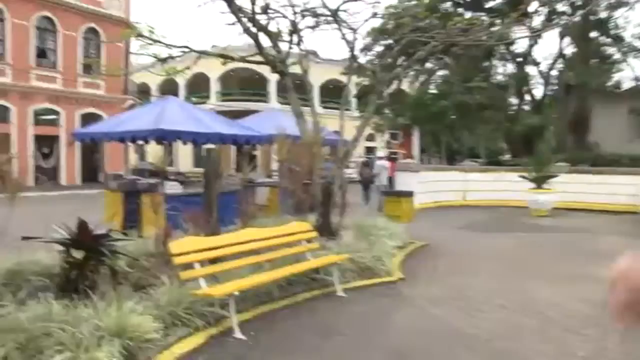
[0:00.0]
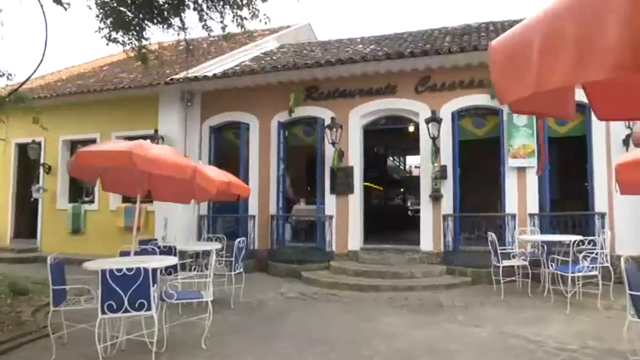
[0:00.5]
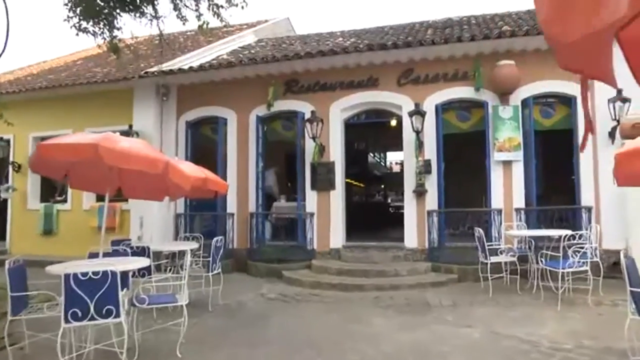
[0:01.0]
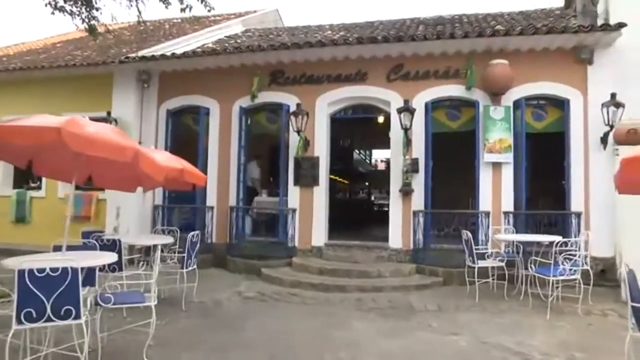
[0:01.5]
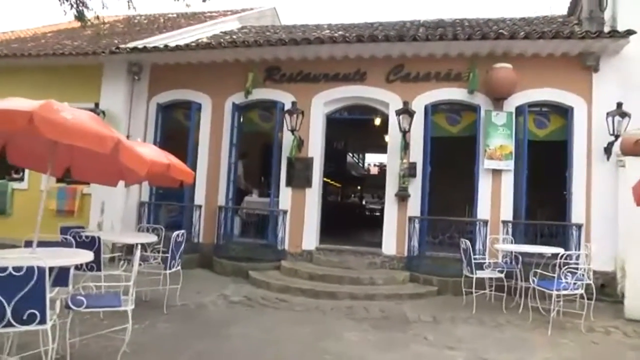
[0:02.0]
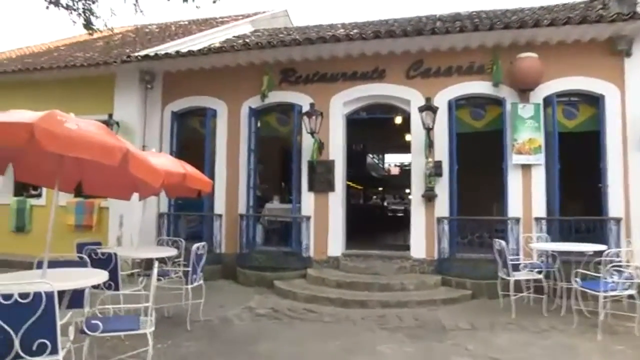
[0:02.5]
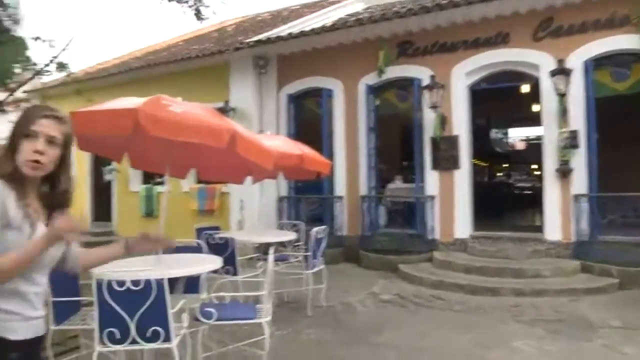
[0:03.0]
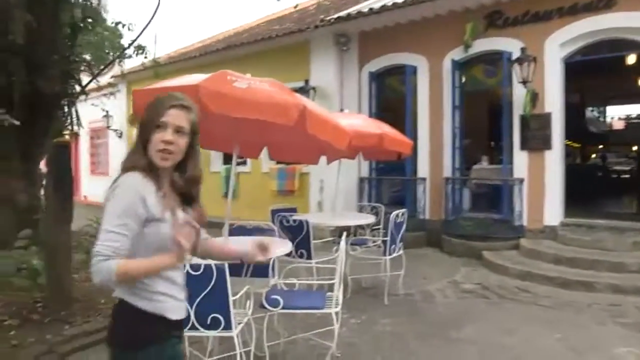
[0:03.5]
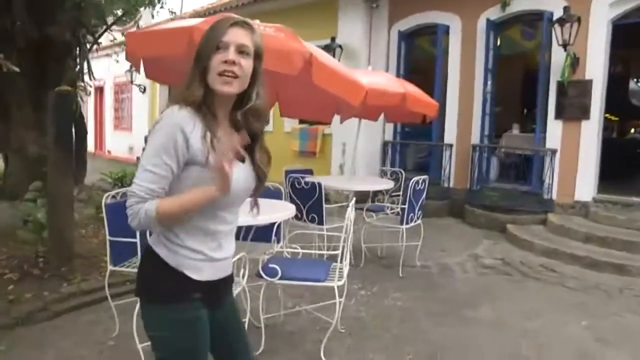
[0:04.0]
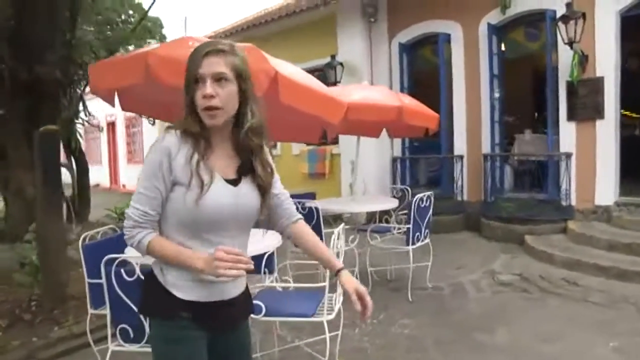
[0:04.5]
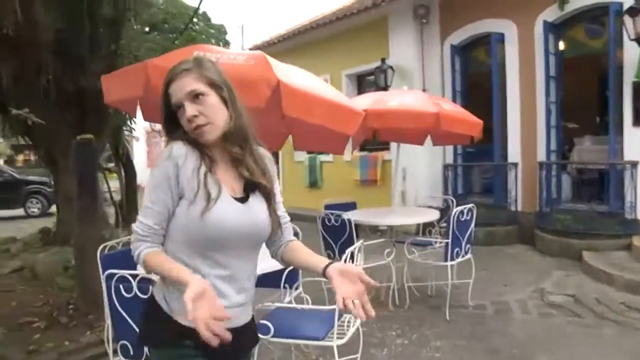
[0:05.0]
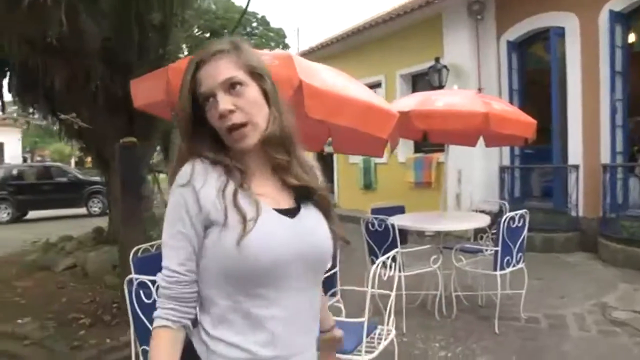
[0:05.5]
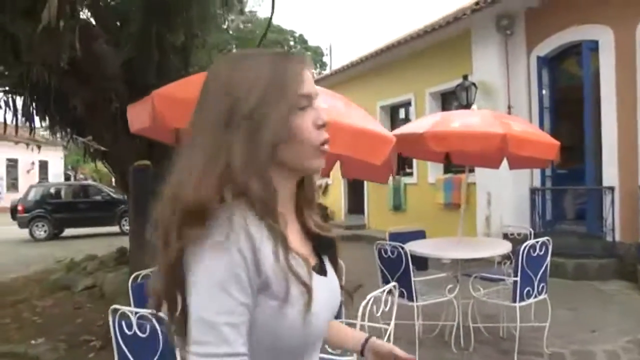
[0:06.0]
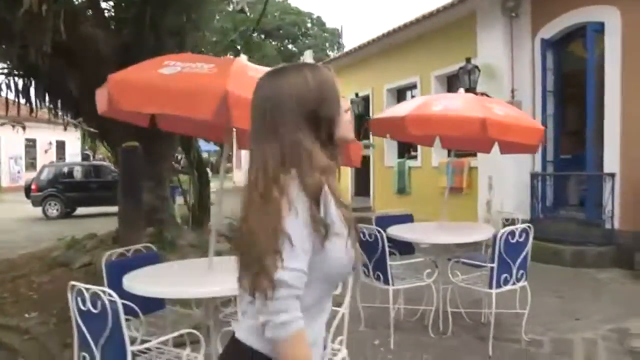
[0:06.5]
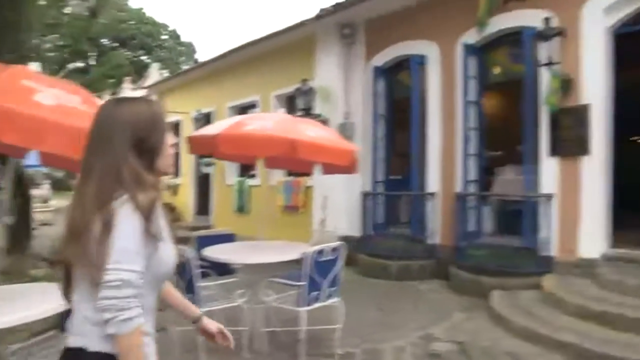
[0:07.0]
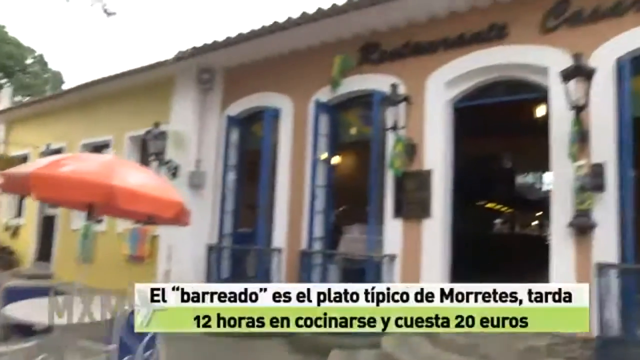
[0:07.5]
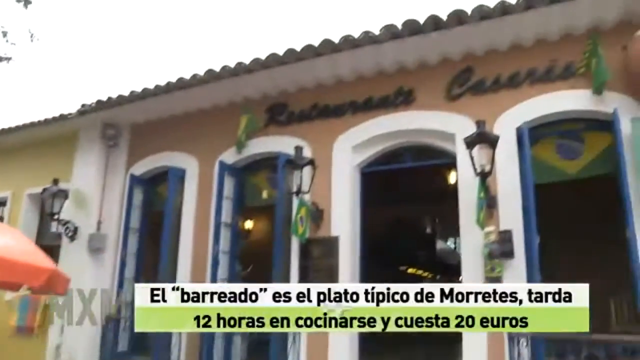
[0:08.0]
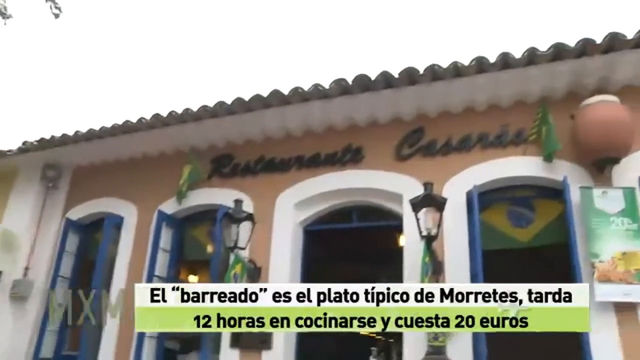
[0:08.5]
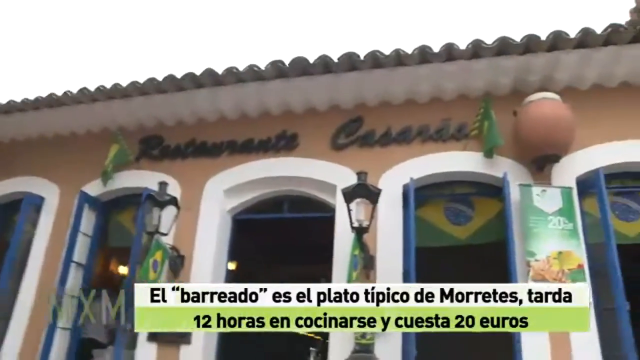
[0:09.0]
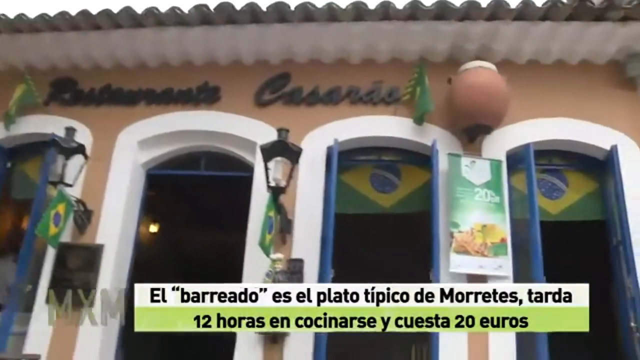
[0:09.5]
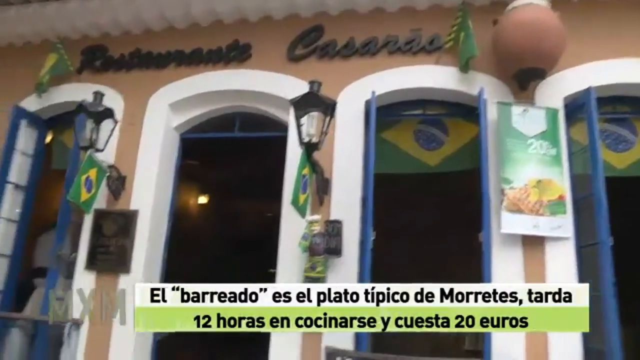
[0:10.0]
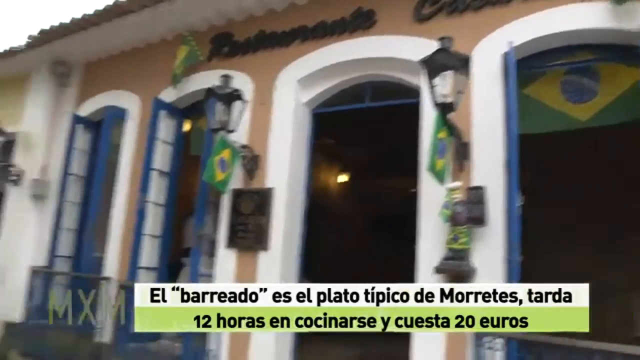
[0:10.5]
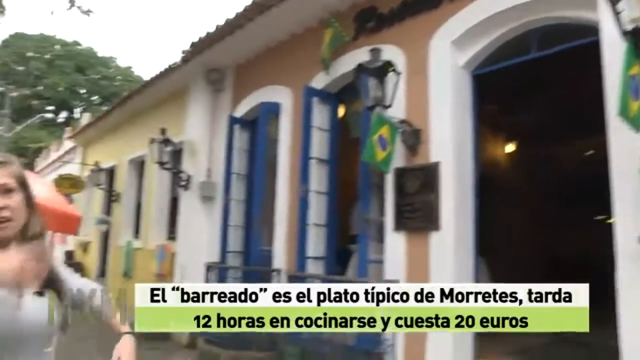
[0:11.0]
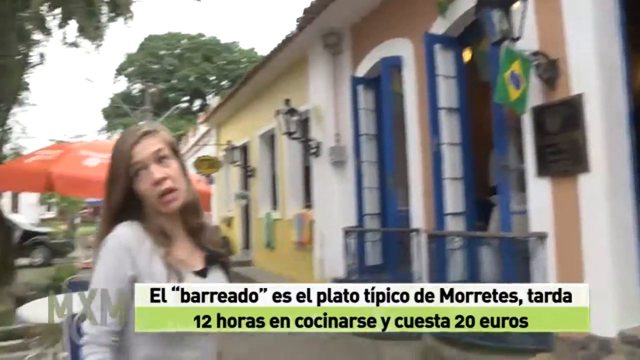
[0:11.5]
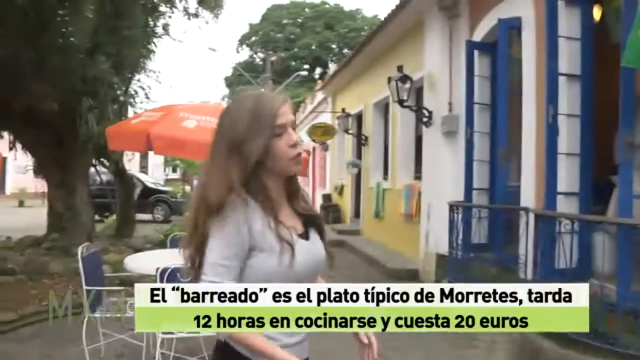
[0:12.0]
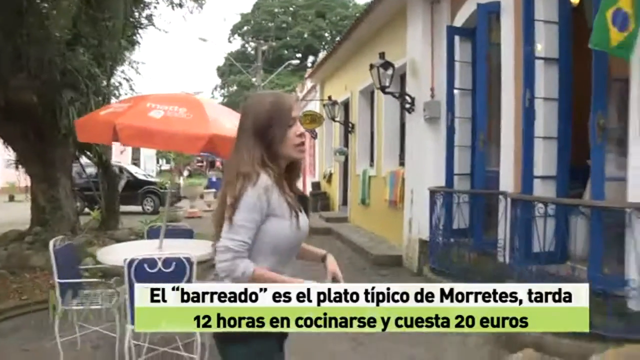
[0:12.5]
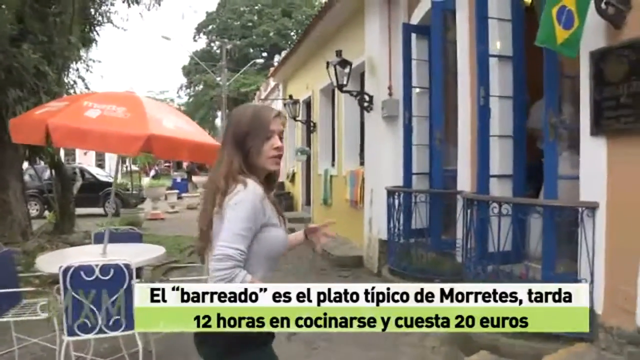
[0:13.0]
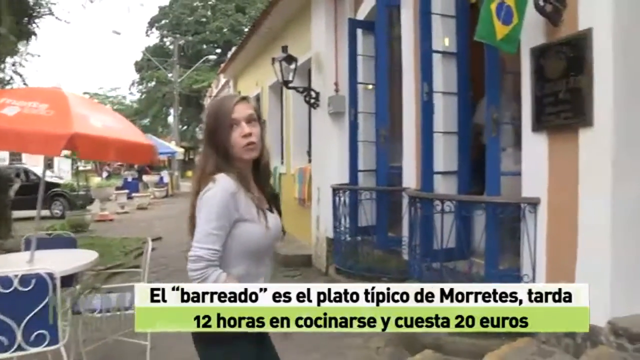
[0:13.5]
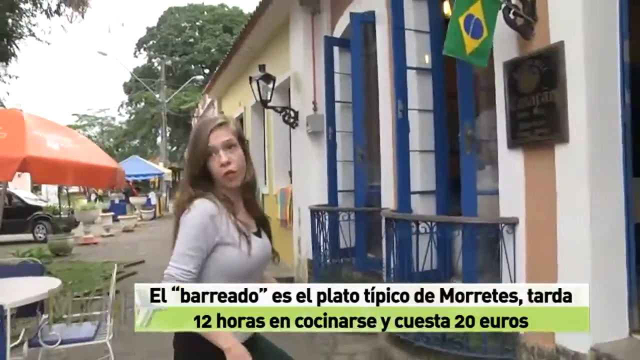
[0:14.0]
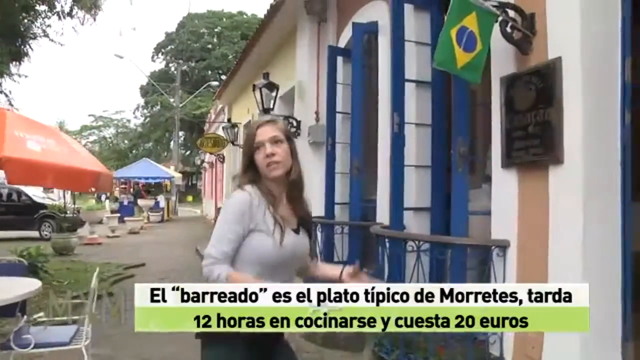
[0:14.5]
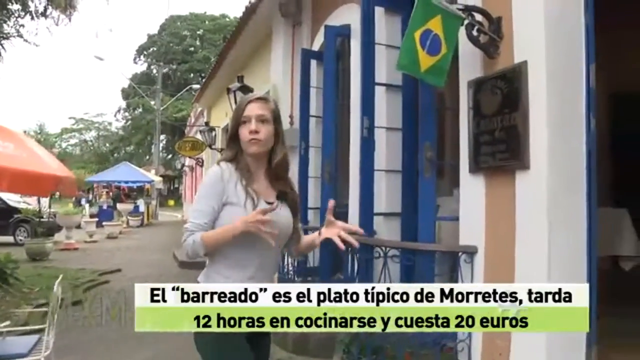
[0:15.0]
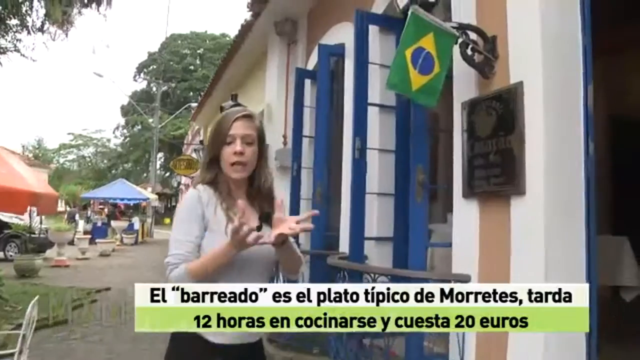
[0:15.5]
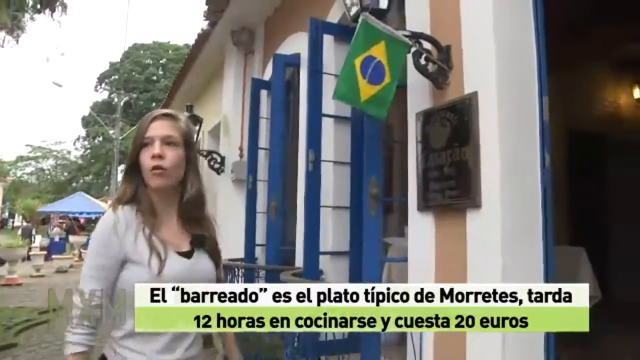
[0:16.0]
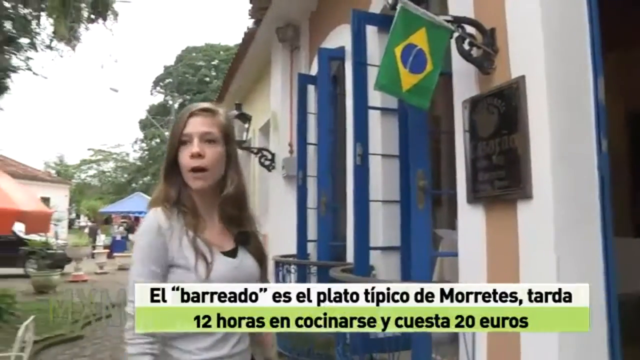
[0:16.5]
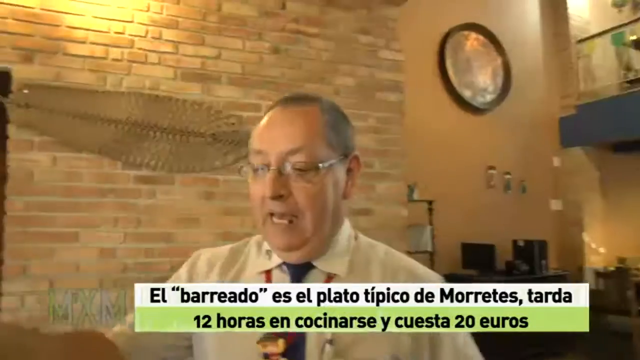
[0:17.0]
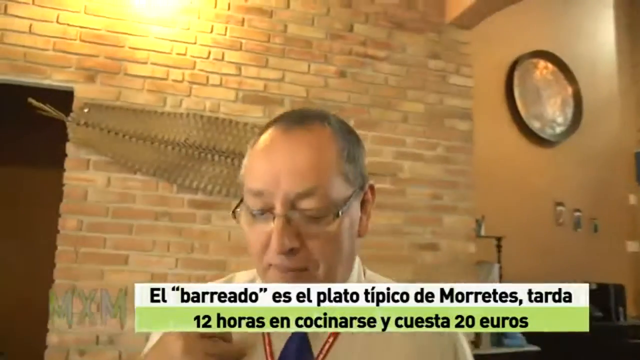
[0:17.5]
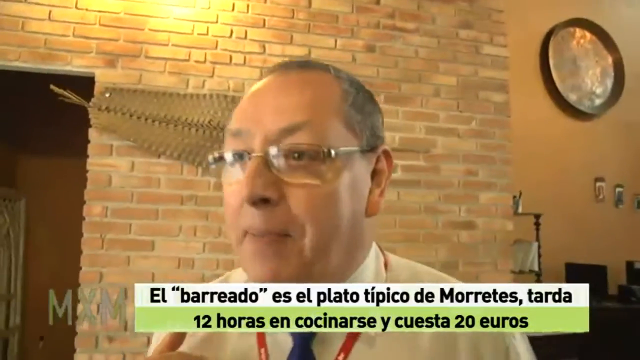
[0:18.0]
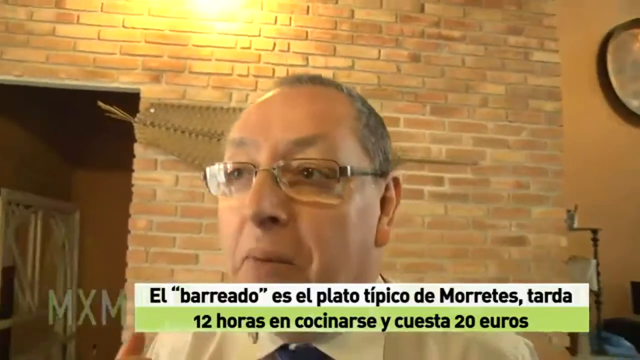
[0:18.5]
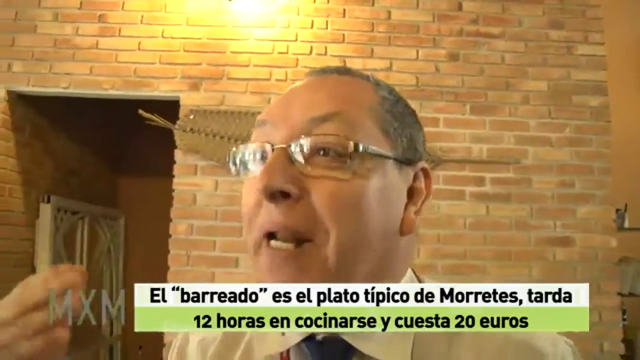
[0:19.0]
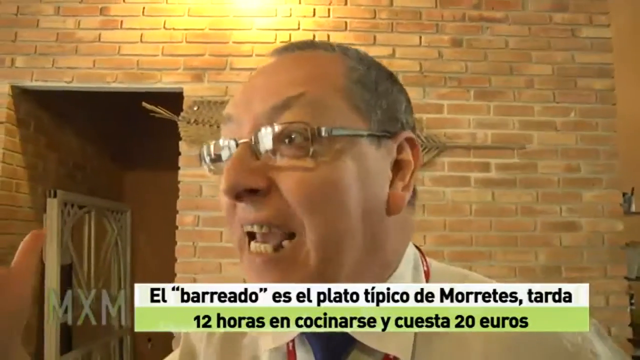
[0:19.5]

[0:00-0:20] A building, possibly a restaurant, displays a Brazilian flag. People walk into the building and are greeted by an employee. It is apparently a Brazilian restaurant or storefront, possibly located in Brazil. The people inside seem very friendly and welcome the visitor, including the camera crew, into the building.